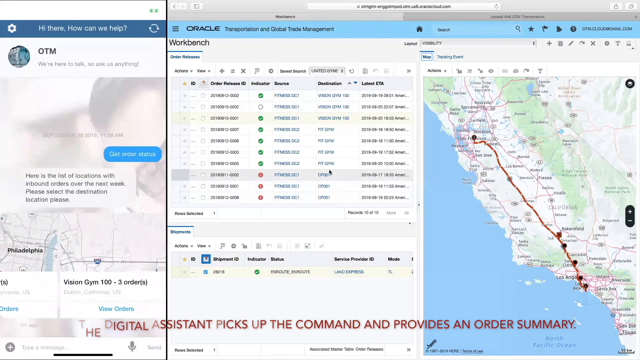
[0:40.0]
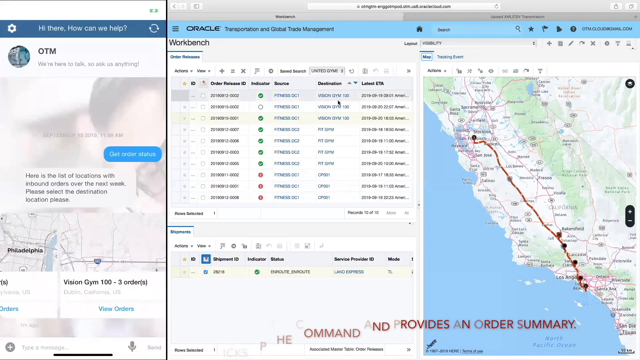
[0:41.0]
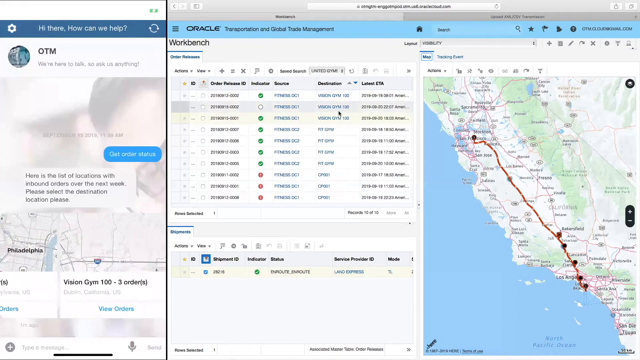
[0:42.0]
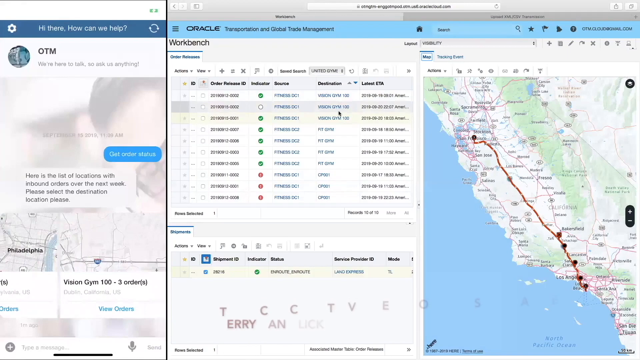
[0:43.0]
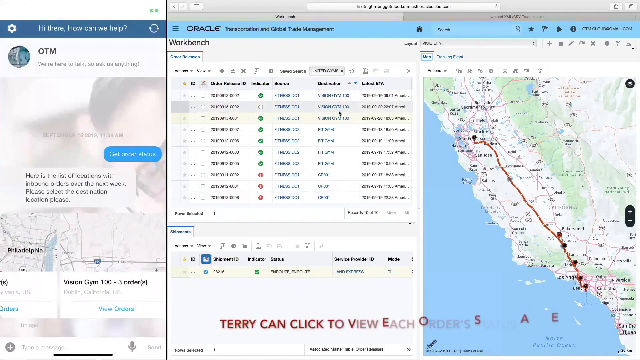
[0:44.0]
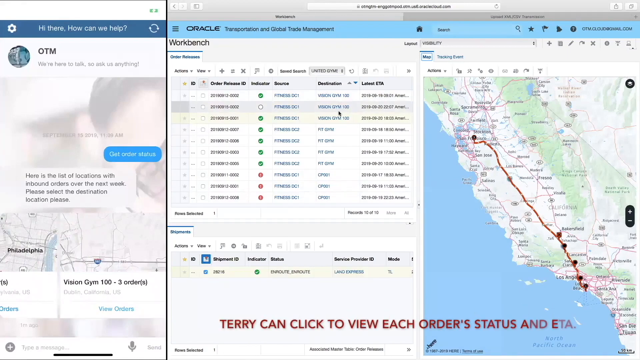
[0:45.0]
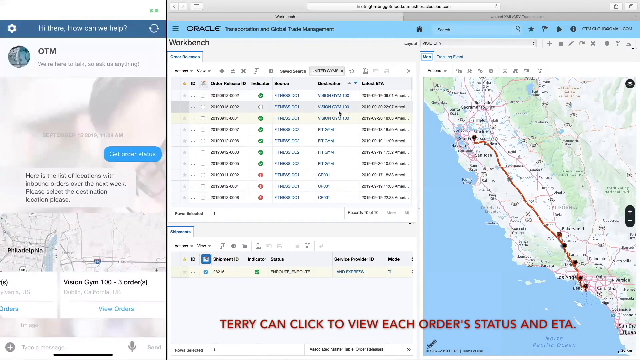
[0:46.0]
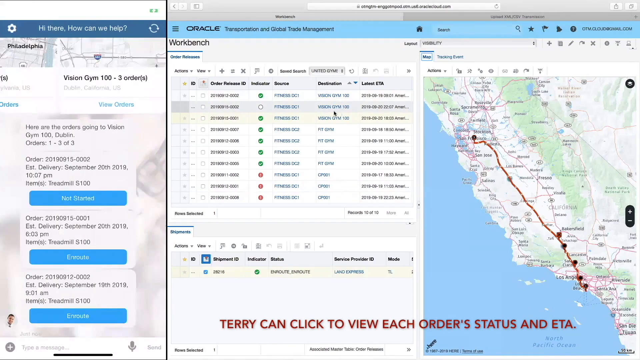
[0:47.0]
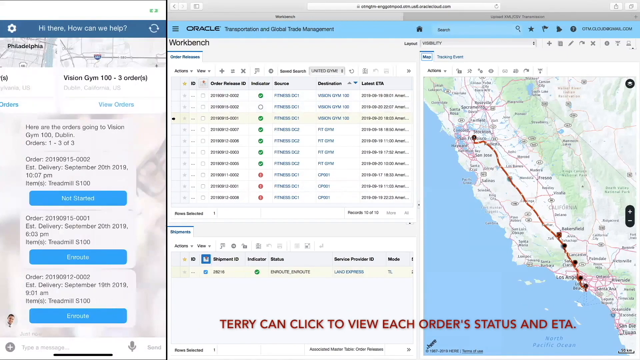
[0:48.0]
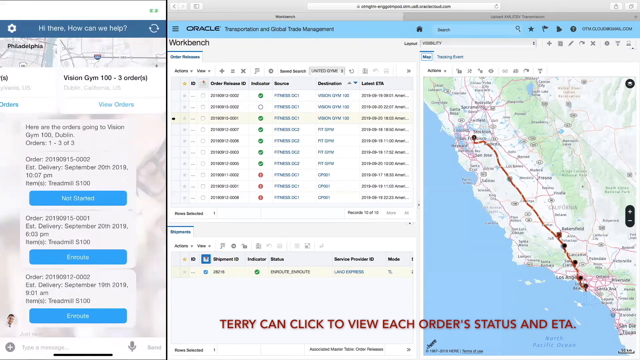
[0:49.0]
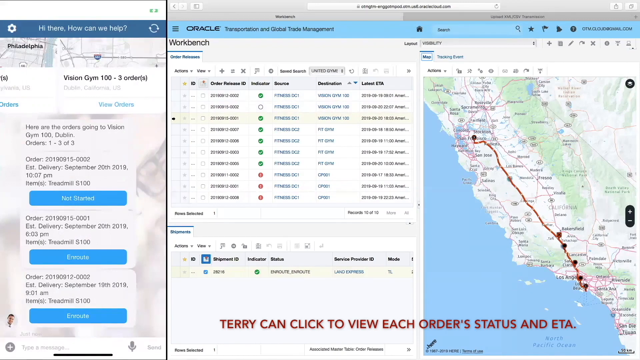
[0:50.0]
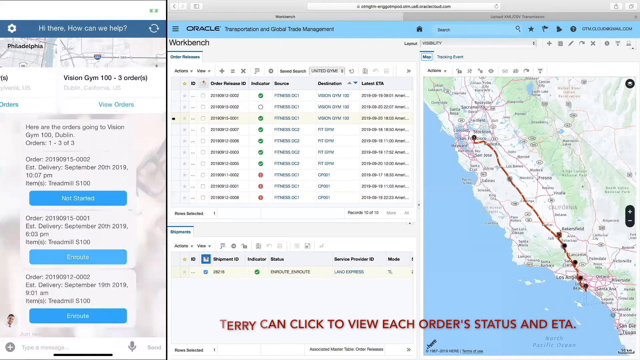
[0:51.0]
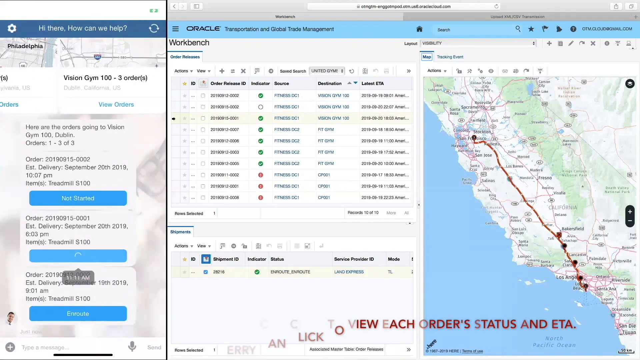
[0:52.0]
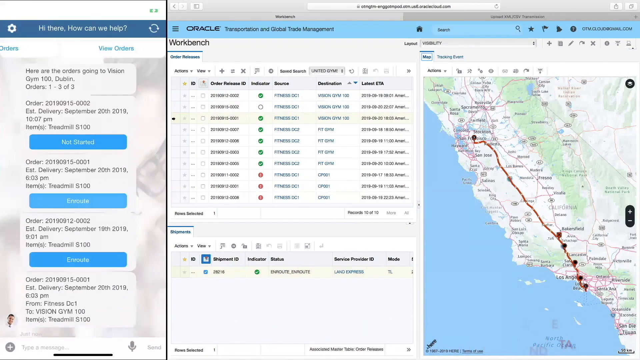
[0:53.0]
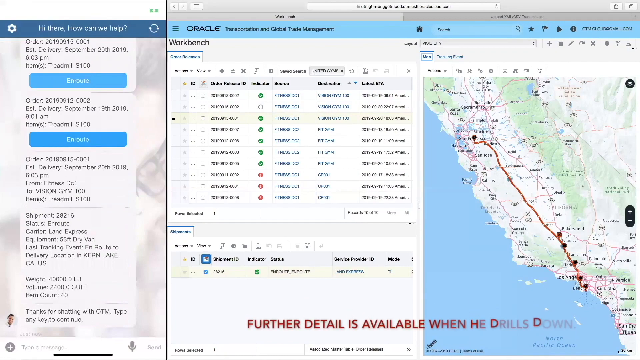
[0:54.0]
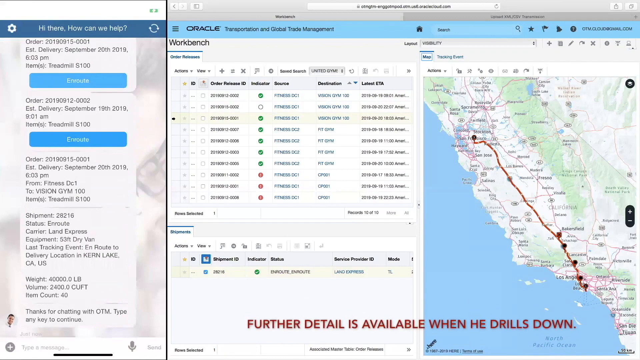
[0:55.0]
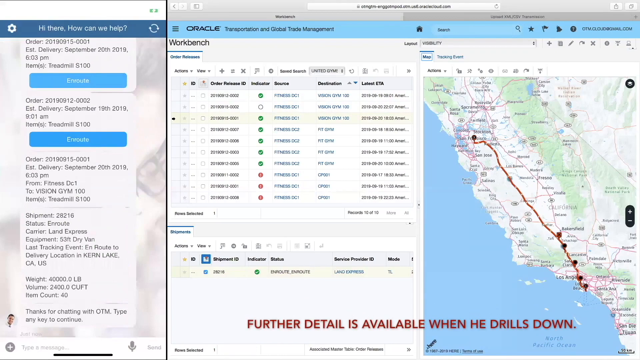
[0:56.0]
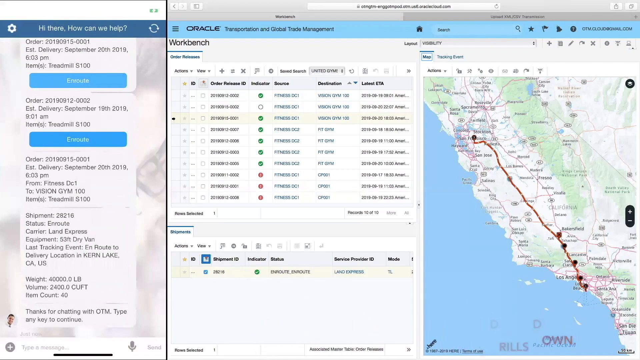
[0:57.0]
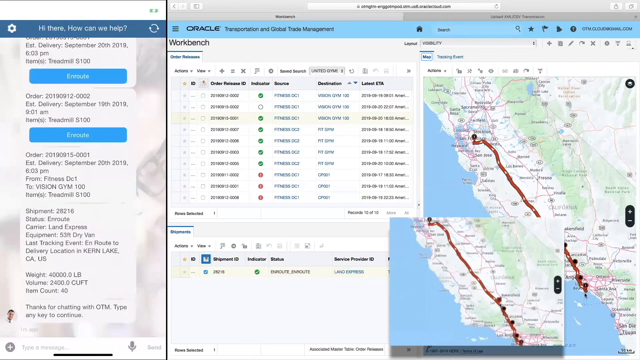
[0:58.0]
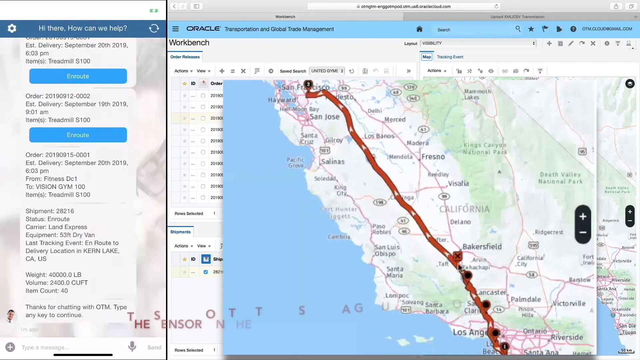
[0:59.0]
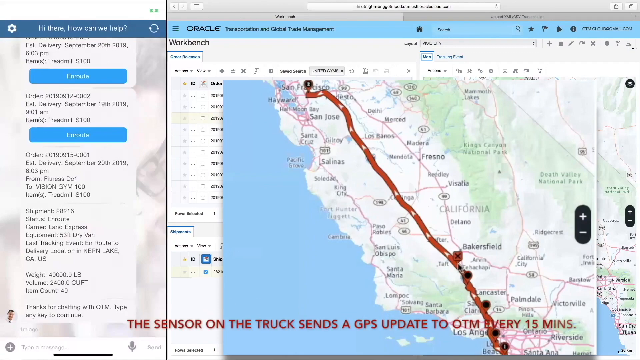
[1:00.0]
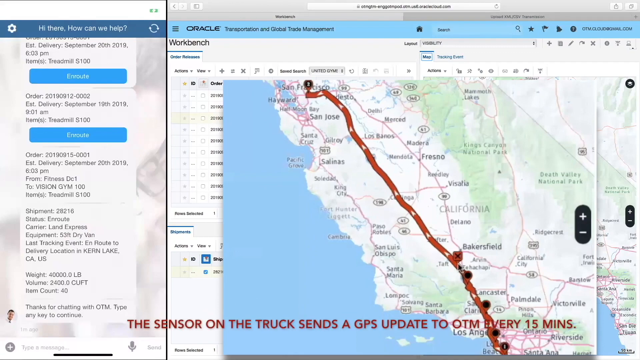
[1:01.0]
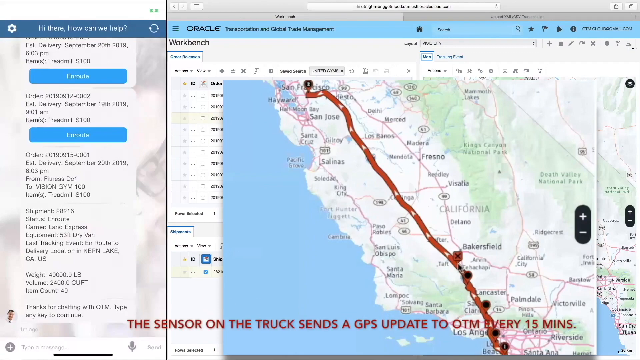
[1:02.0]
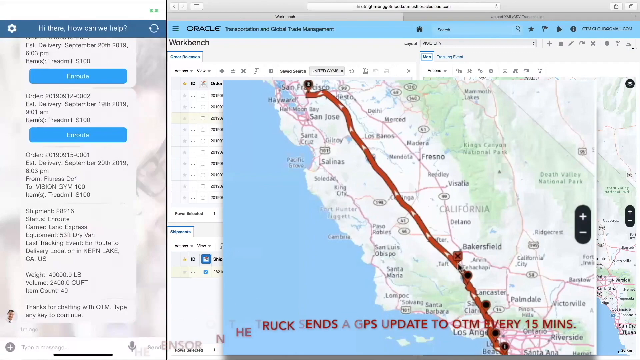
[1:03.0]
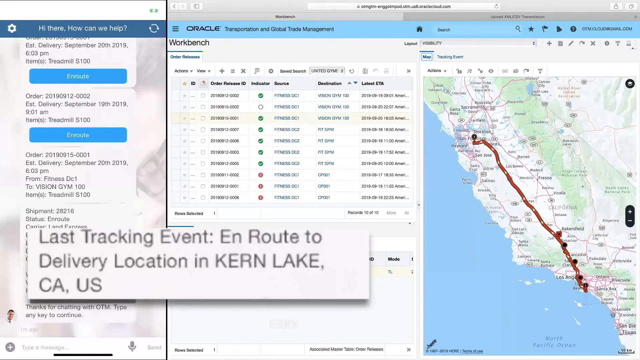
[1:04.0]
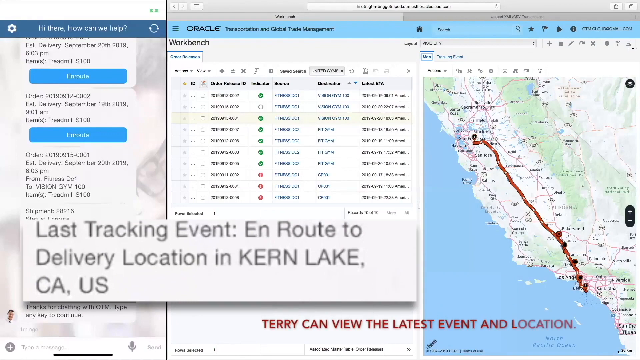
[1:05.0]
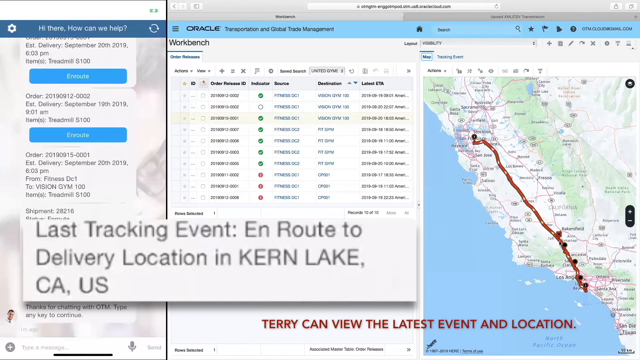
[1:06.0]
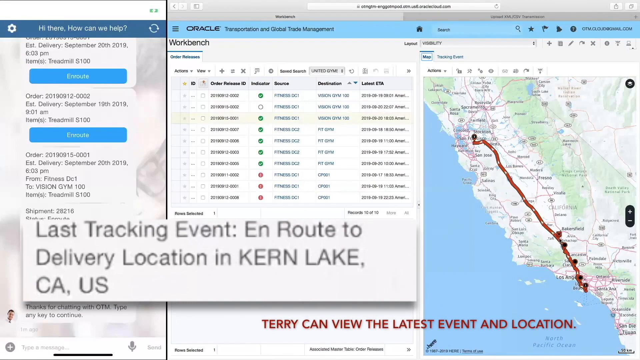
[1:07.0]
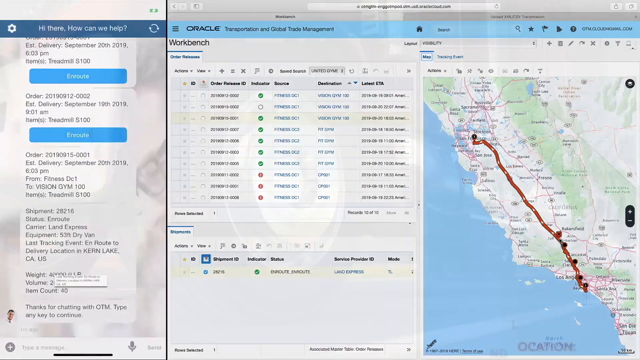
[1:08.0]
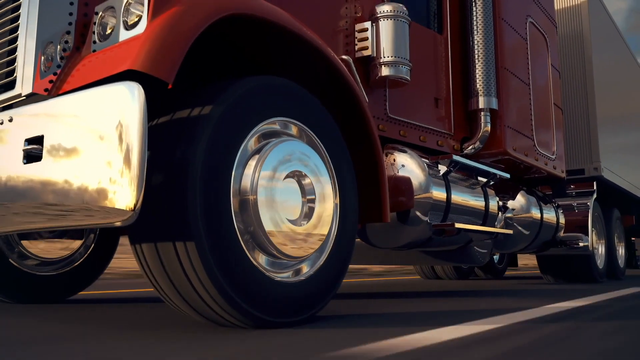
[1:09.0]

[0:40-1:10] The Oracle Workbench remains on screen with the message board on the left. The user moves the mouse and hovers over the different selections under the orders. The text at the bottom changes to "Terry can click to view each order status and ETA". After the hovering, the message board on the left changes and different orders appear on it. He clicks a button under one of the products, and more messages pop up. The video zooms onto a part of the map as the text "the sensor on the truck sends a GPS update to OTM every 15 minutes" appears at the bottom. It then zooms back out from the map and zooms in on text on the left side showing the last tracking event and information about it. The words "Terry can view the latest event and location" appear in red text in the bottom right and then disappear. At the very end, an image appears of a rig driving on a highway, with the camera close to its front tire as it drives.